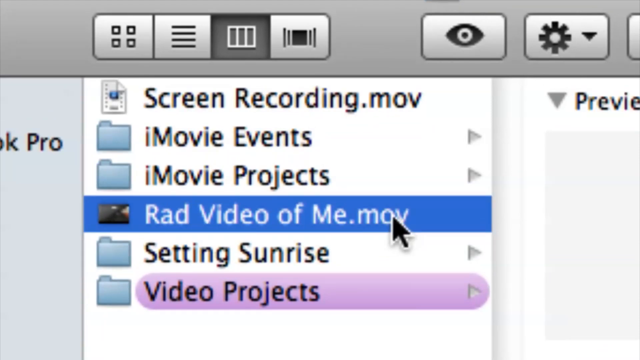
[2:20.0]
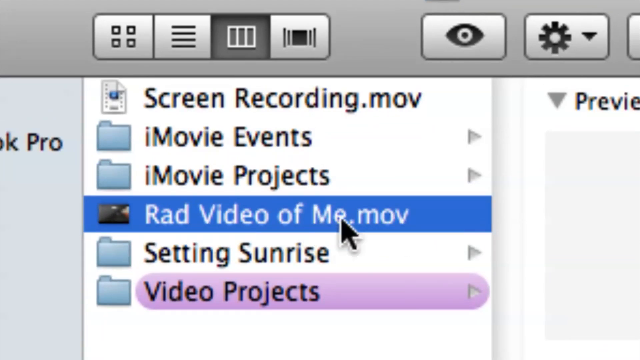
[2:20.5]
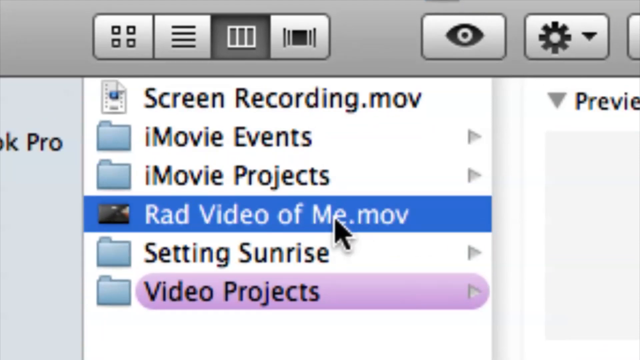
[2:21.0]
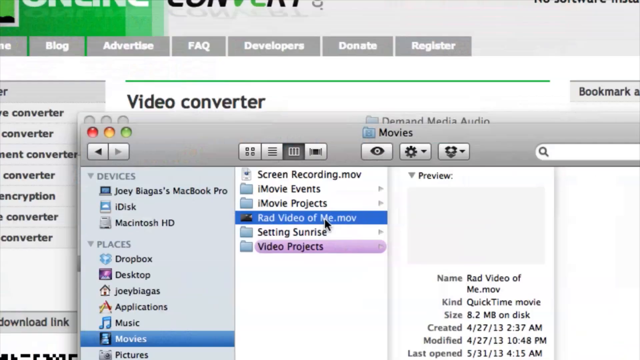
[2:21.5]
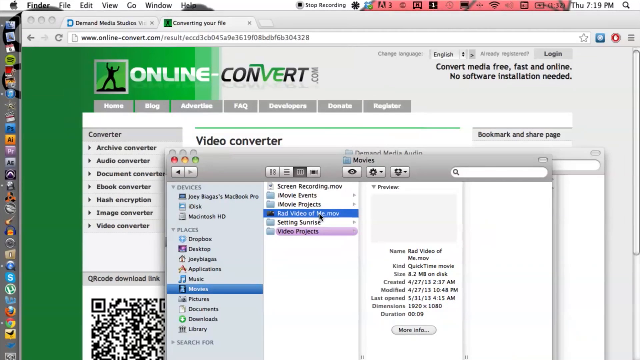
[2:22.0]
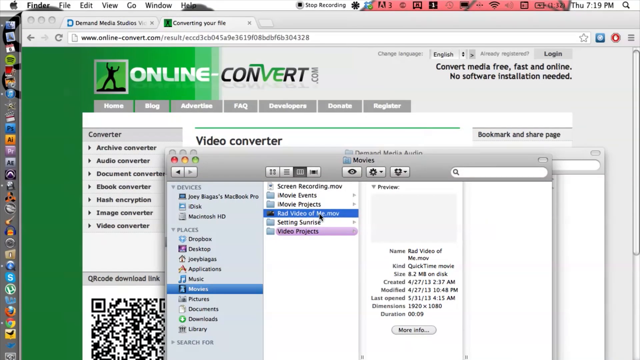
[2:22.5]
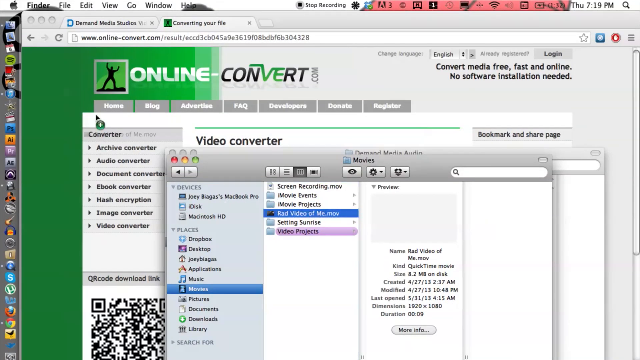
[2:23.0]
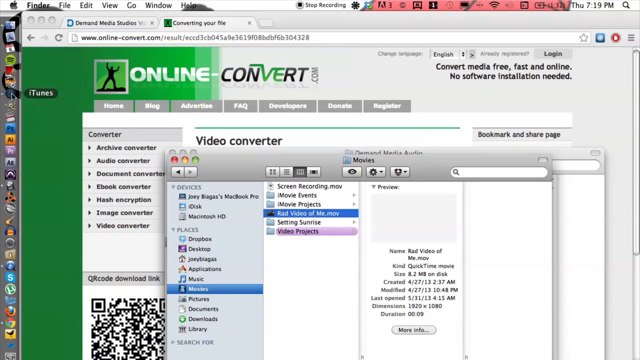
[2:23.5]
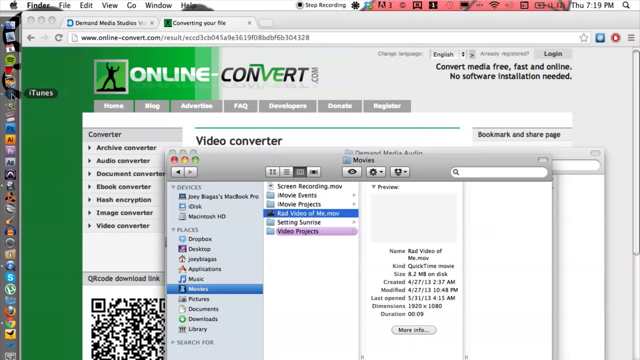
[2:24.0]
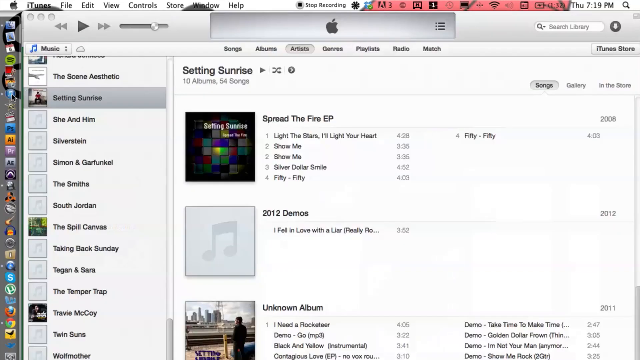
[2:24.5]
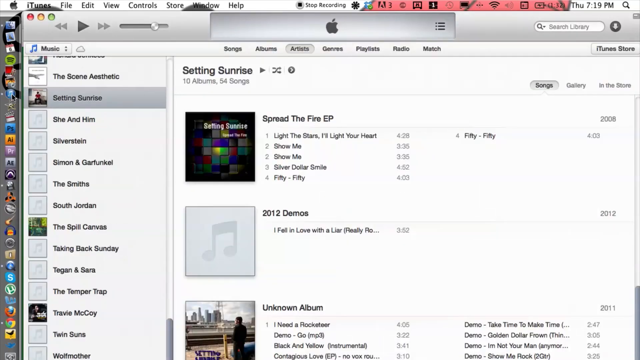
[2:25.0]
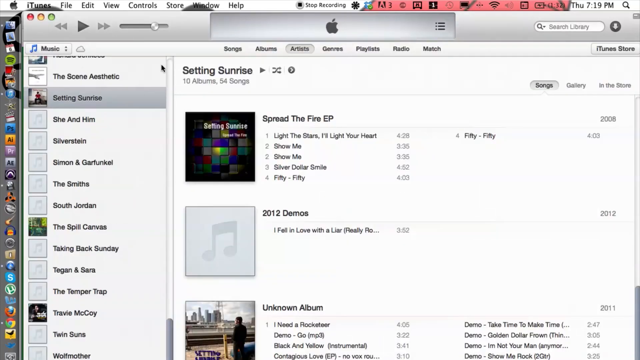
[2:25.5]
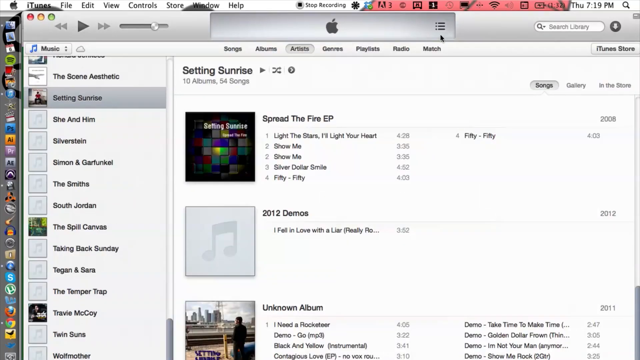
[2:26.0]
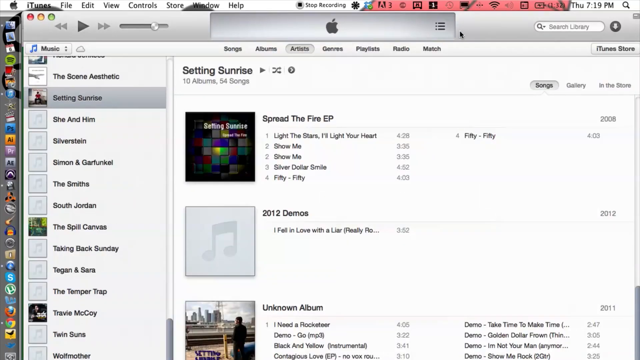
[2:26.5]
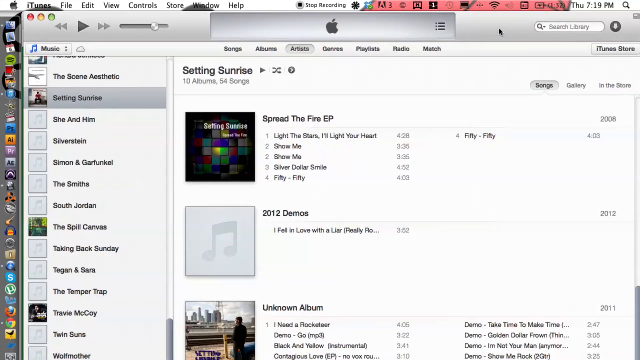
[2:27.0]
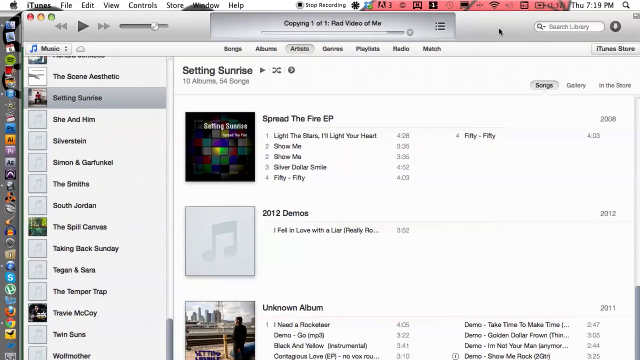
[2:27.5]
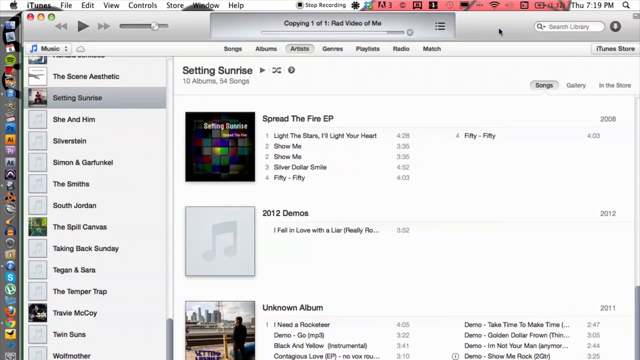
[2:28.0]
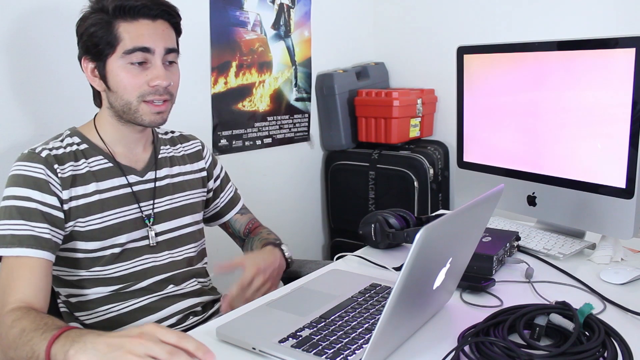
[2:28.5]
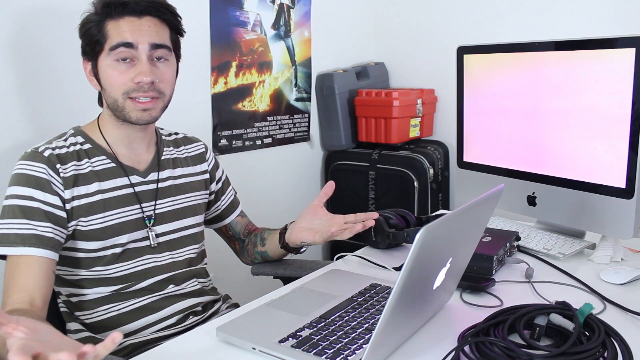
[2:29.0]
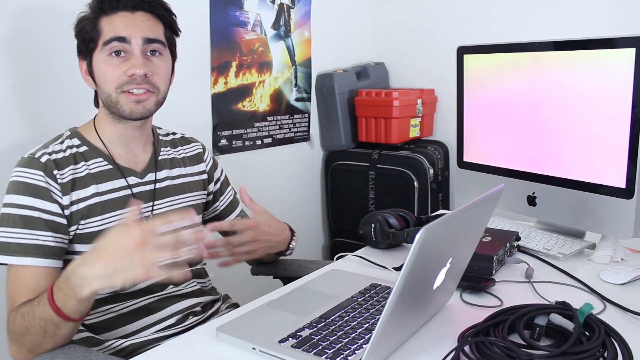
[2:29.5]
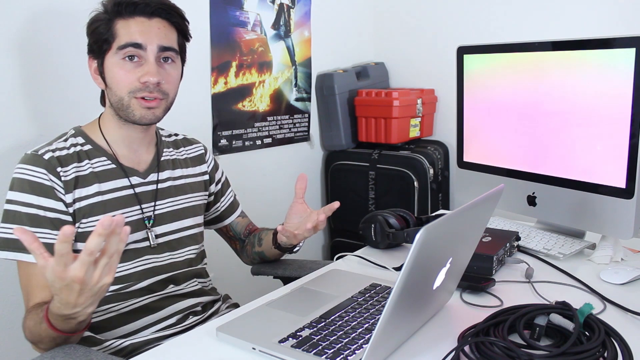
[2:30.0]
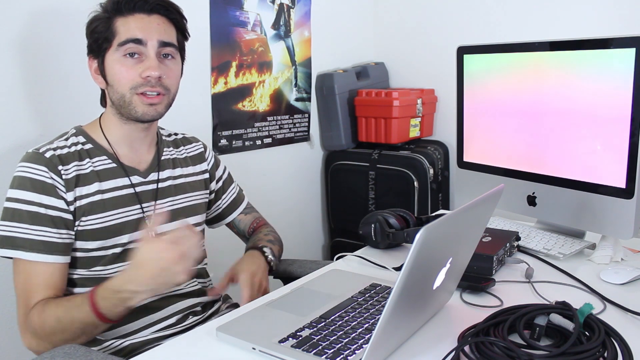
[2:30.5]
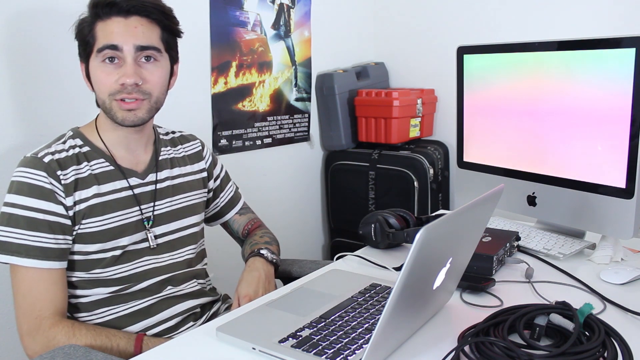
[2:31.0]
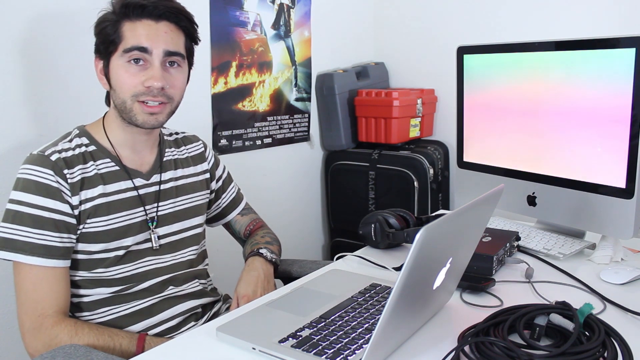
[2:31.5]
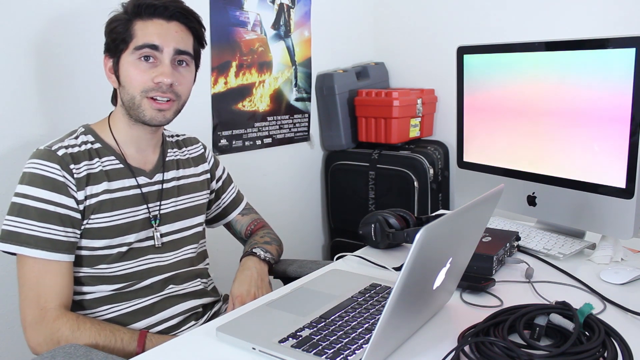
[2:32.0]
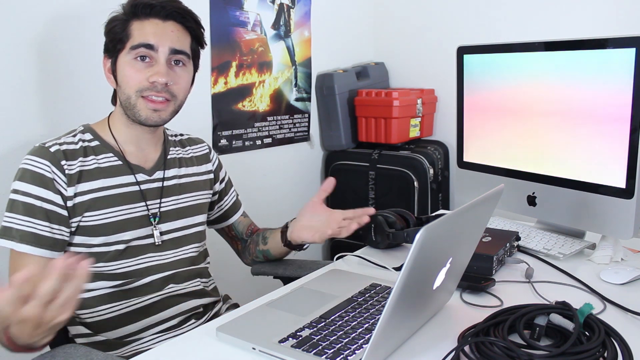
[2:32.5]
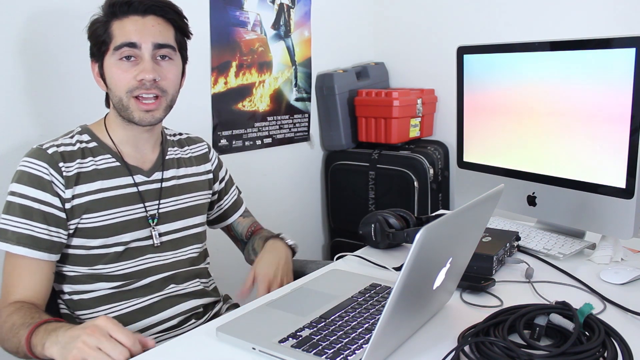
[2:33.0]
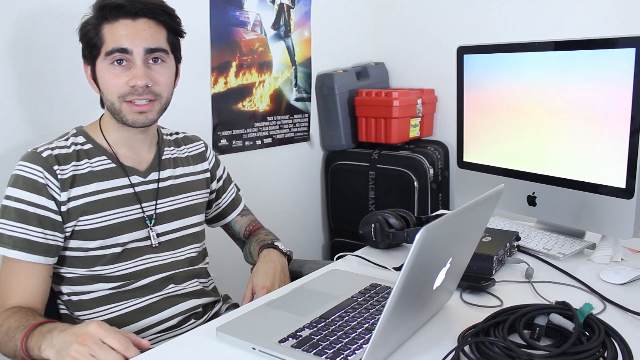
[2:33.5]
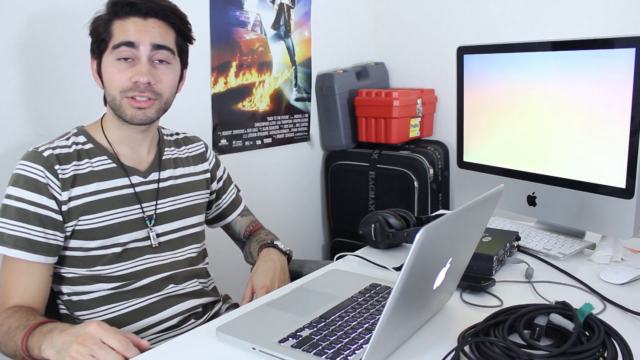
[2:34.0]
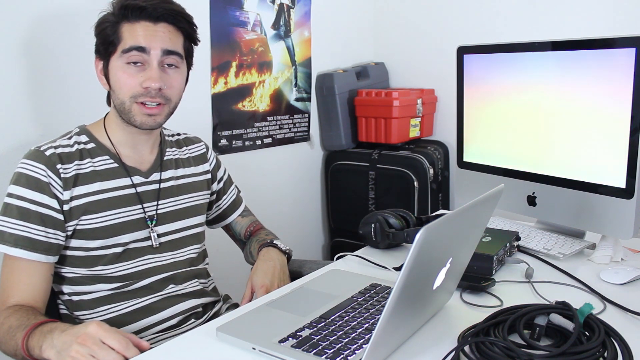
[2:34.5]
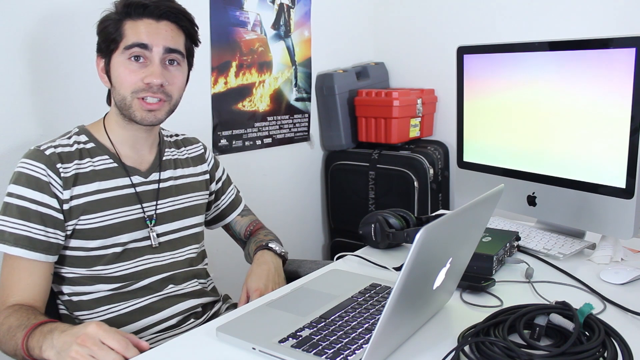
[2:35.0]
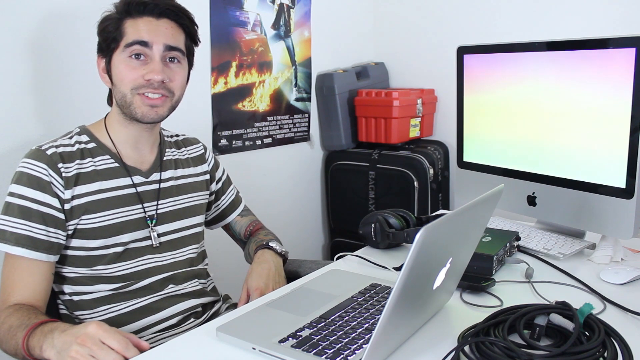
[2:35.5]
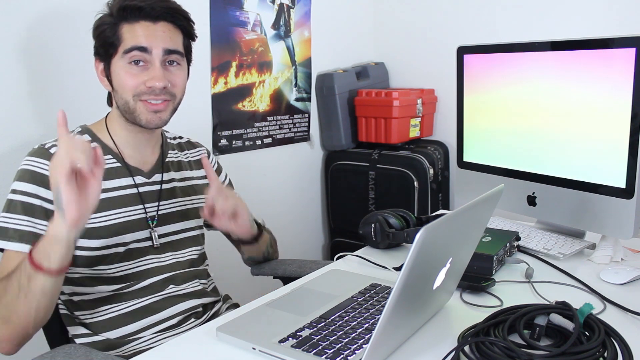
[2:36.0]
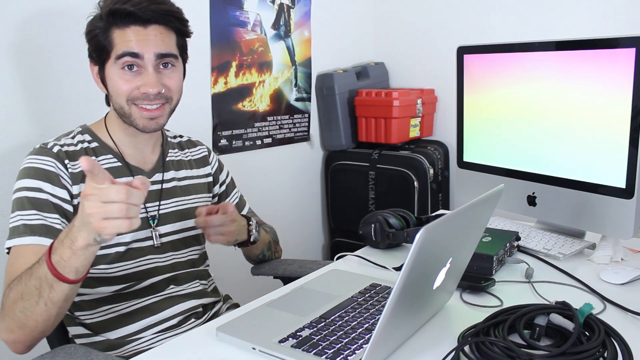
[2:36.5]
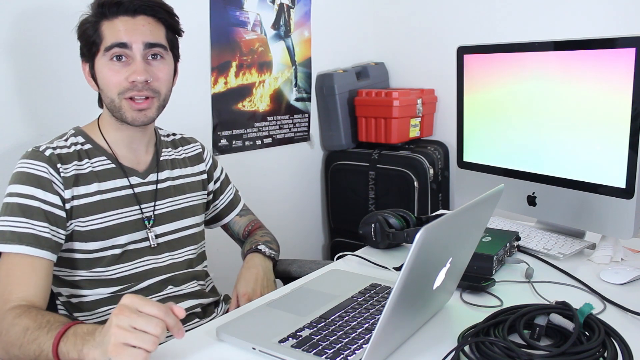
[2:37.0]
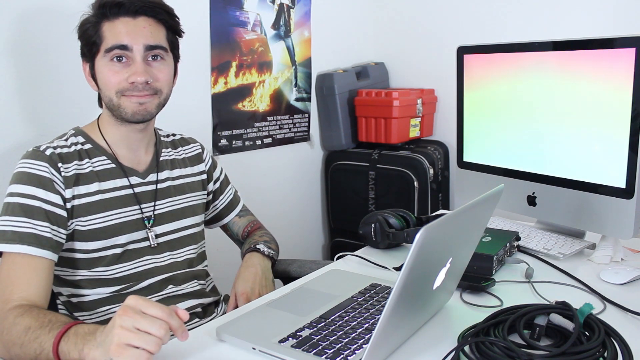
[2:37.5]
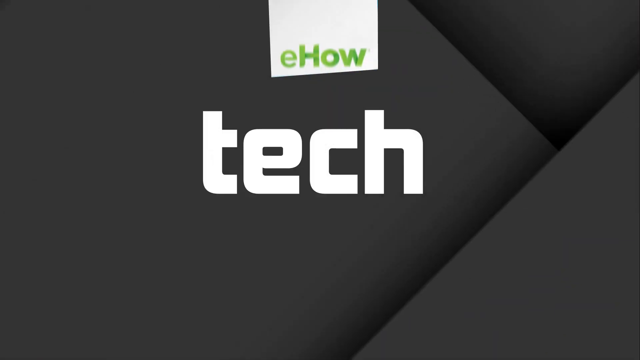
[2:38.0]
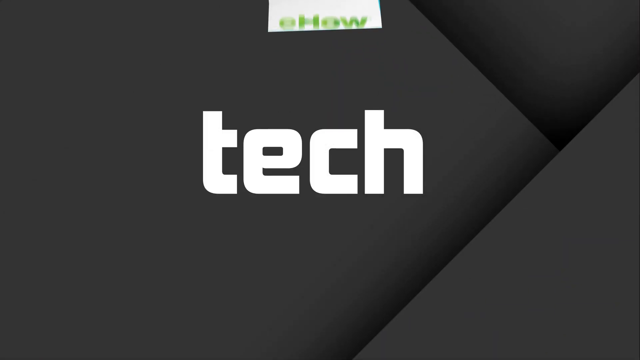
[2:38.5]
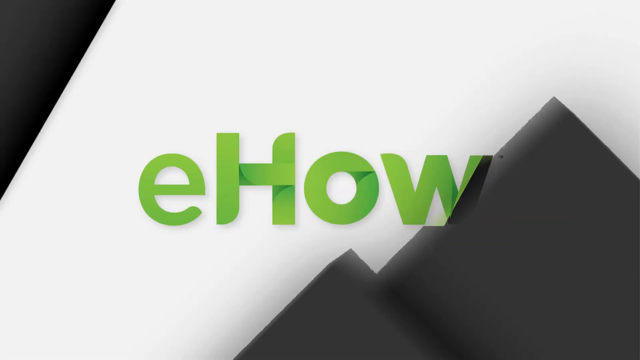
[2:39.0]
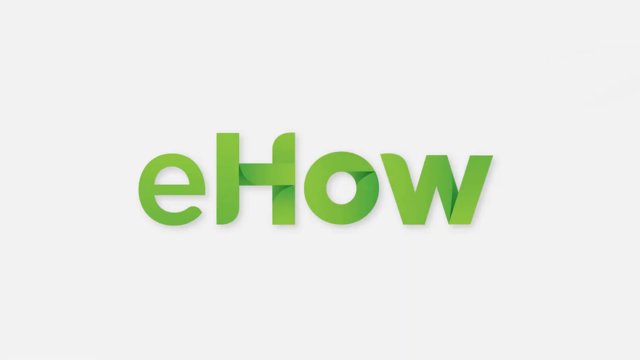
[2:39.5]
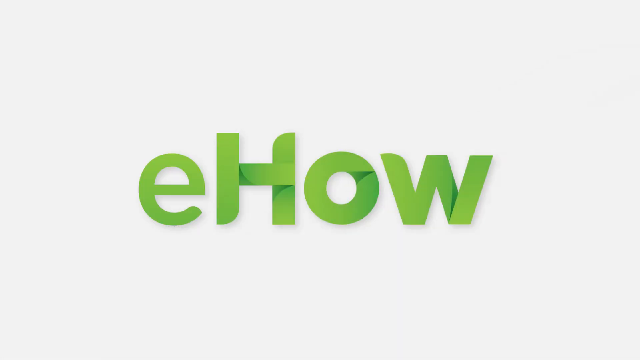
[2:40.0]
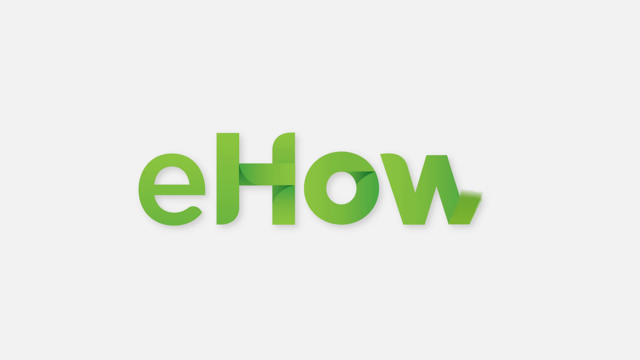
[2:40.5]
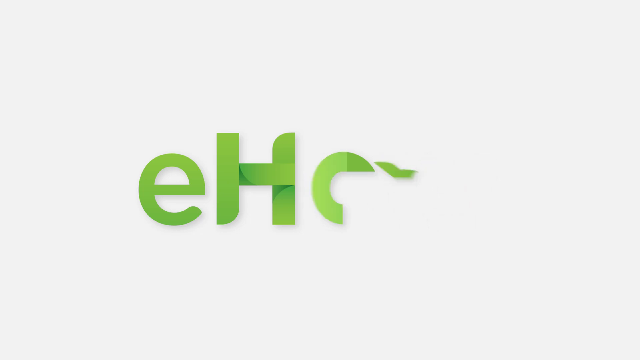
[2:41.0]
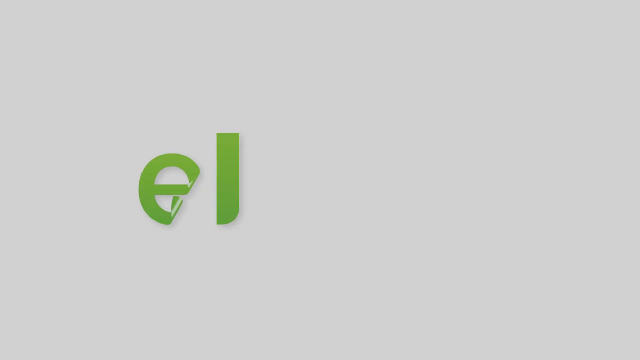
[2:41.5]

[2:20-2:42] The website has a distinctive style: the left-hand side of the screen is dark green and the right-hand side is white. The video then cuts to the Caucasian man in a casual t-shirt with brown and white stripes, who points at the computer screen with an enthusiastic and relaxed attitude. The format is eHow.com, demonstrating how to convert one file into a different type of file.